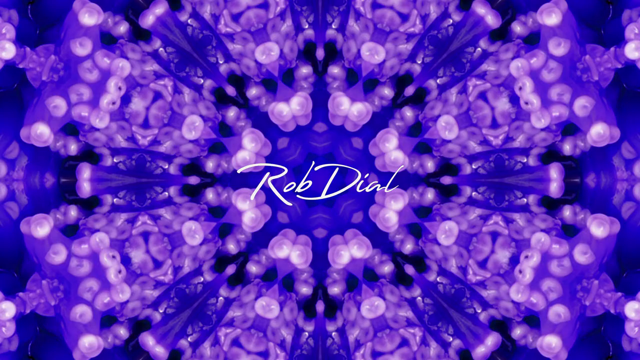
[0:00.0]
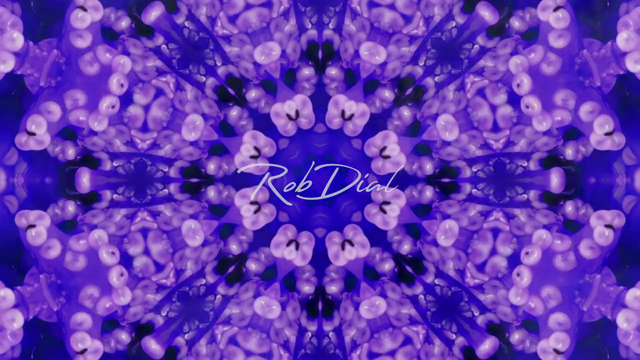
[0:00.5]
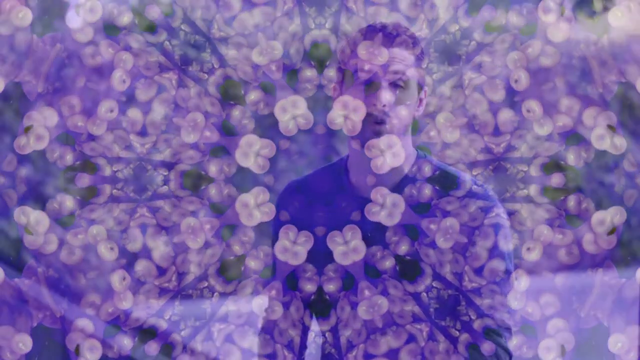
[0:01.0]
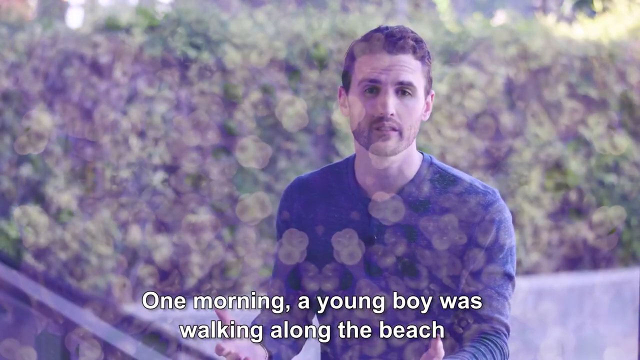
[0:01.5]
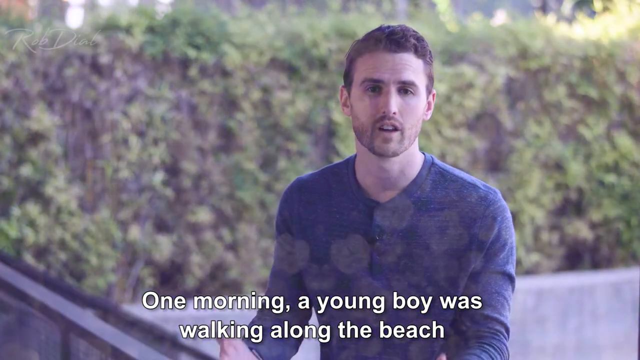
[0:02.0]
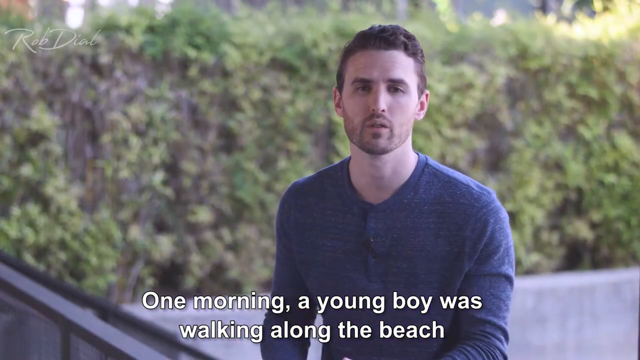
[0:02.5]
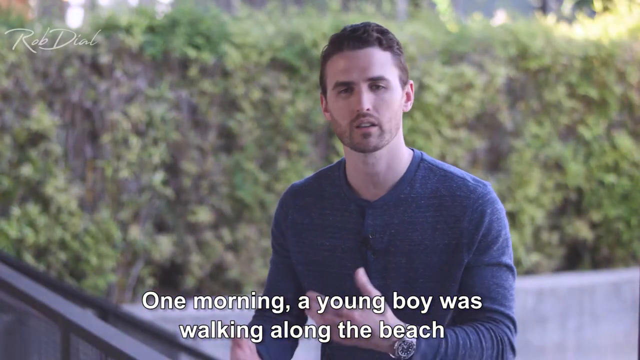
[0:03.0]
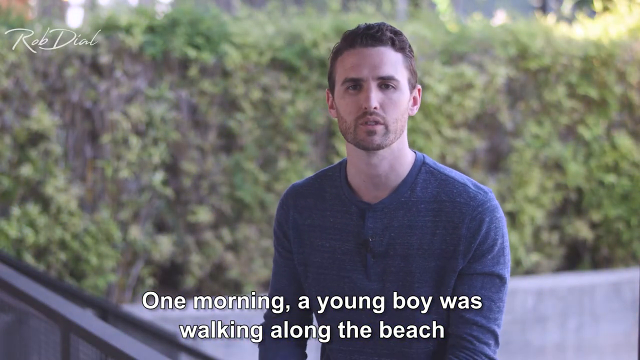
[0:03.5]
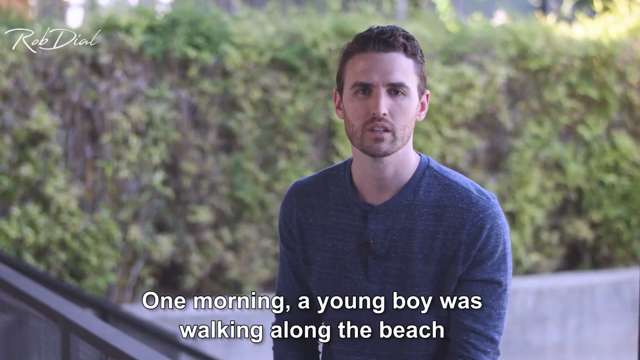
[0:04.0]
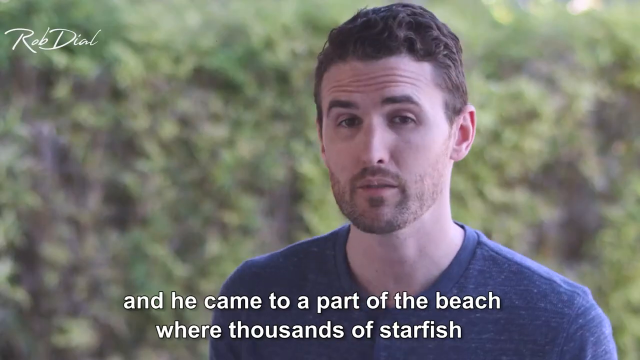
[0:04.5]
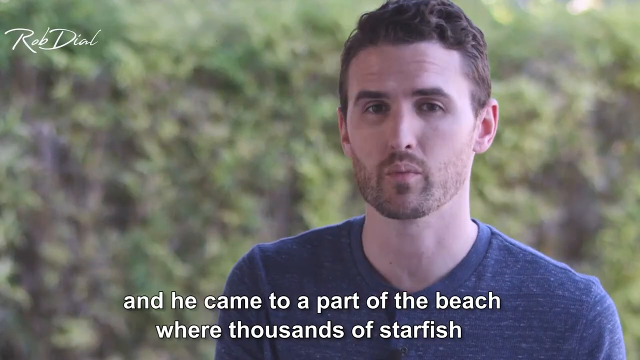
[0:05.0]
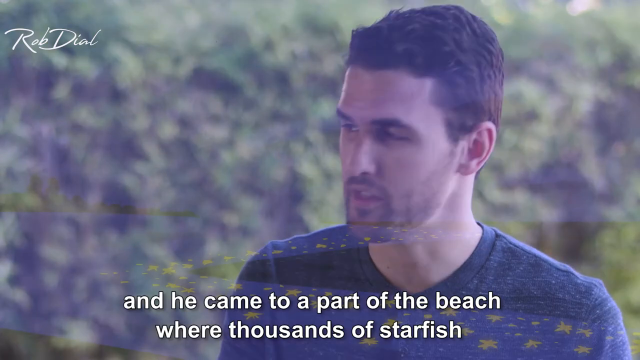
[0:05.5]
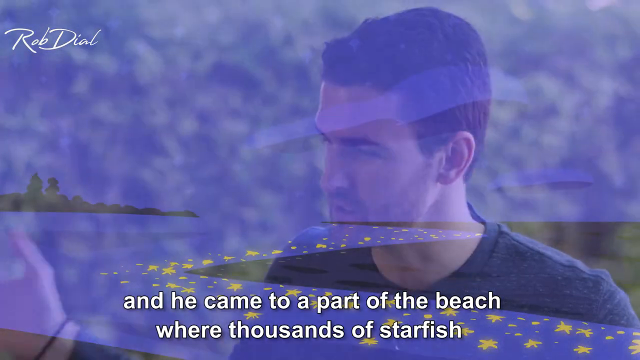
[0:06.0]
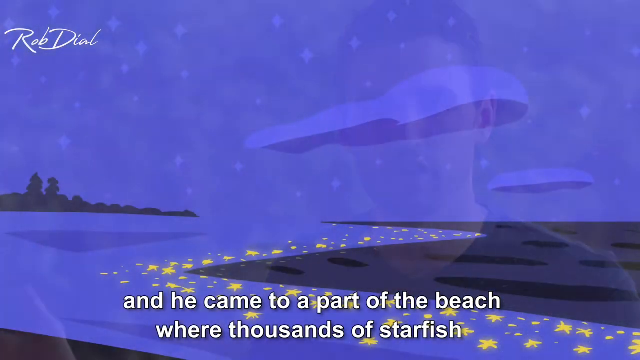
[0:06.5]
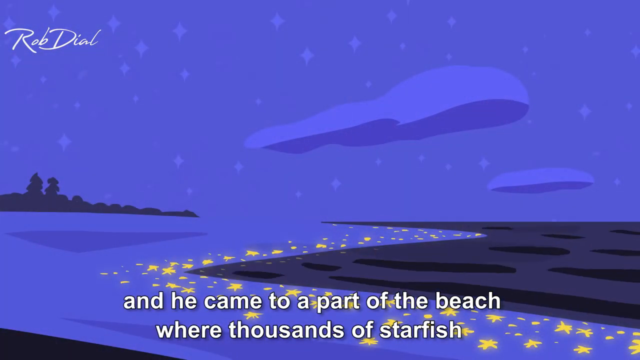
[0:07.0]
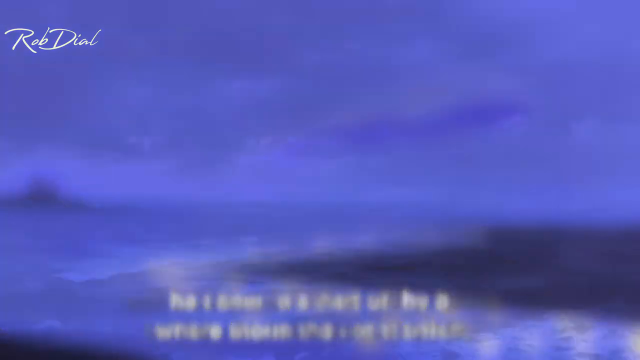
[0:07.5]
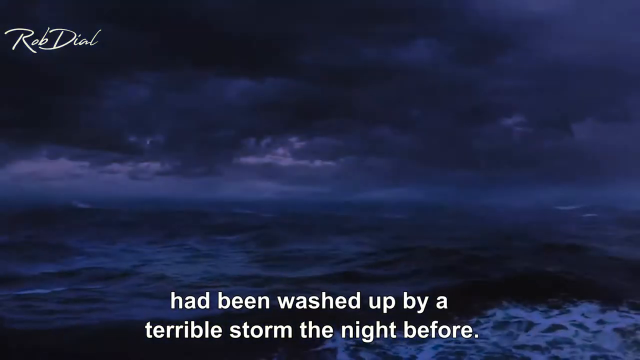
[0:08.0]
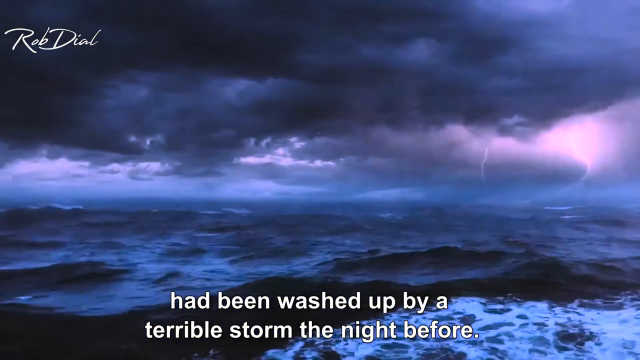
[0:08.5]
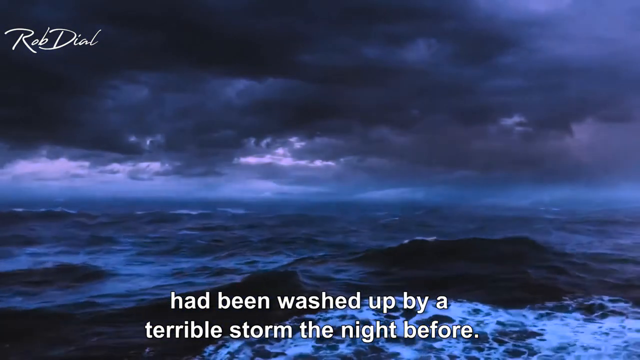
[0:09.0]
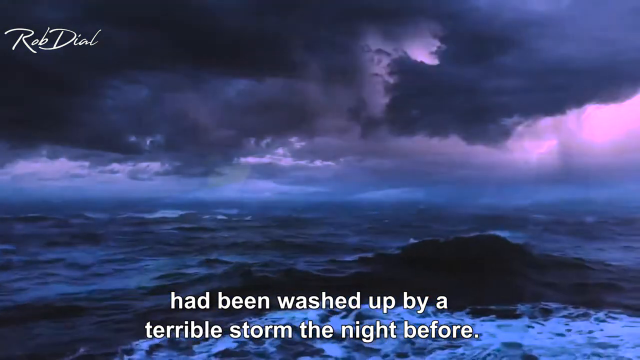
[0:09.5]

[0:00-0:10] A Caucasian man with short hair, wearing a blue shirt, looks at the camera as he speaks and gestures with his hands. He is narrating a story, and a caption of his words appears at the bottom of the screen: "One morning, a young boy was walking along the beach". The camera zooms in on the man as the caption continues: "and he came to a part of the beach where thousands of starfish had been washed up by a terrible storm the night before". The video cuts to a clip of a storm.